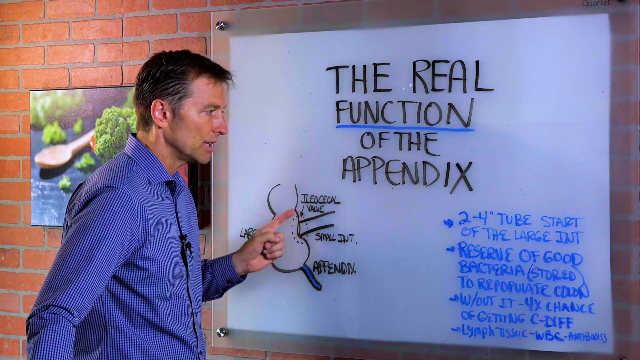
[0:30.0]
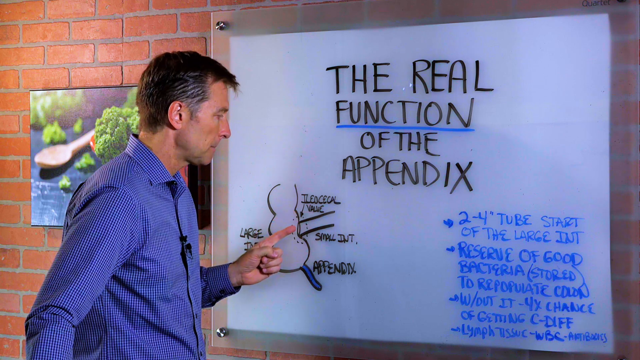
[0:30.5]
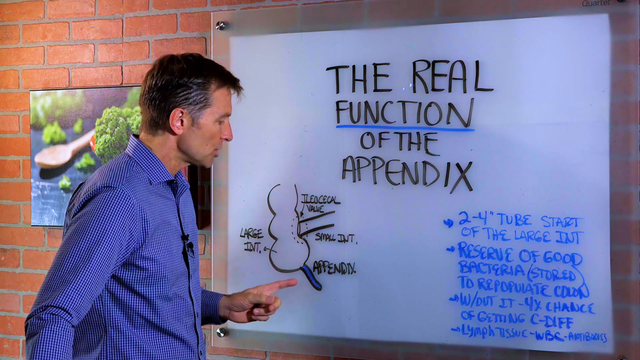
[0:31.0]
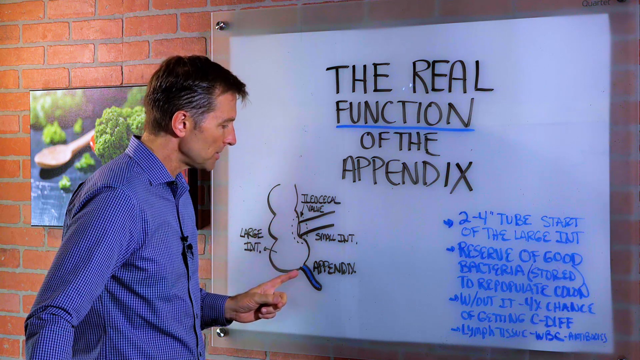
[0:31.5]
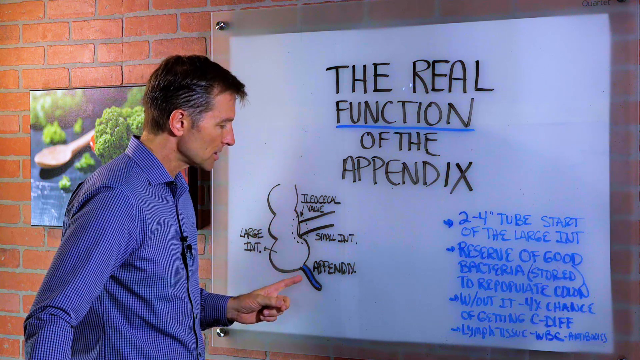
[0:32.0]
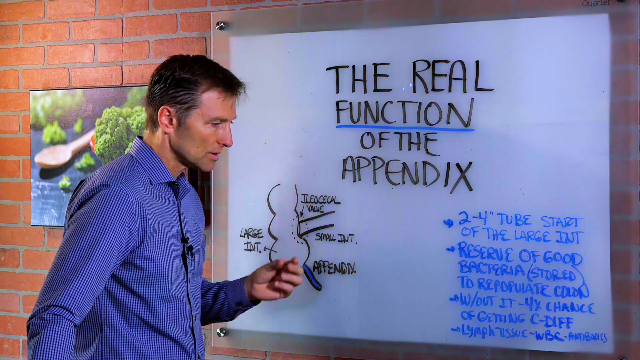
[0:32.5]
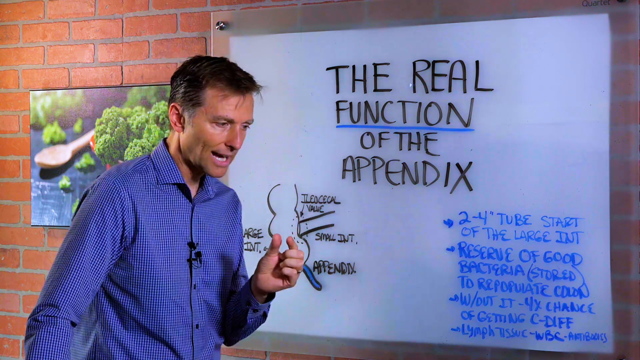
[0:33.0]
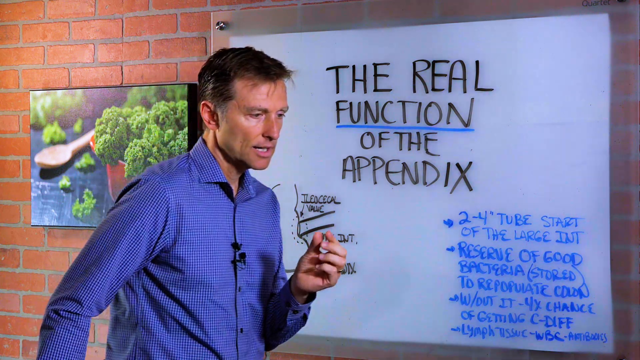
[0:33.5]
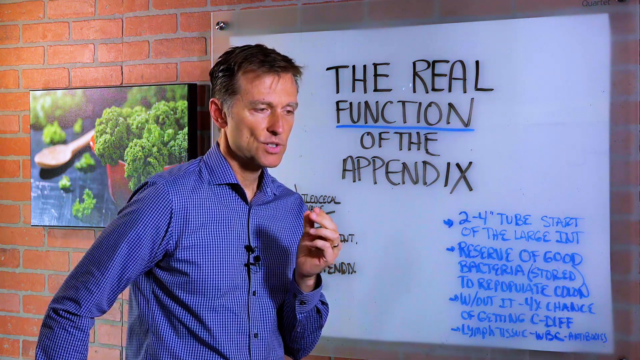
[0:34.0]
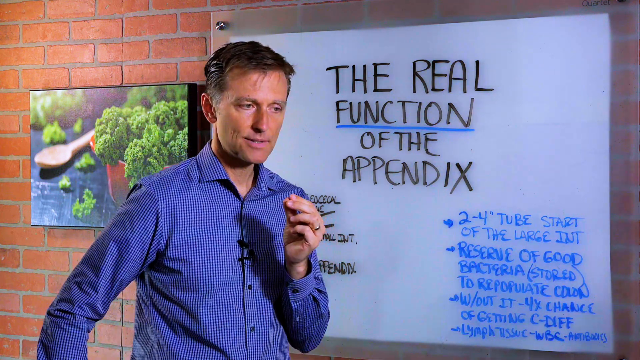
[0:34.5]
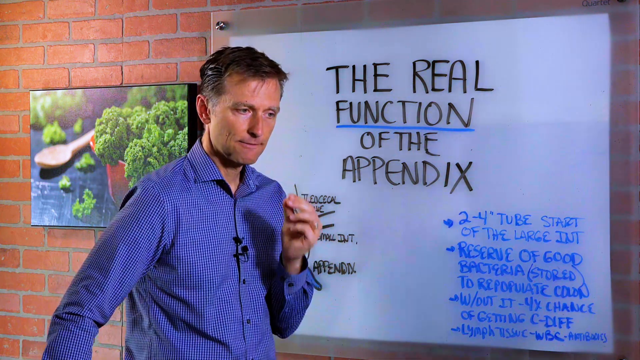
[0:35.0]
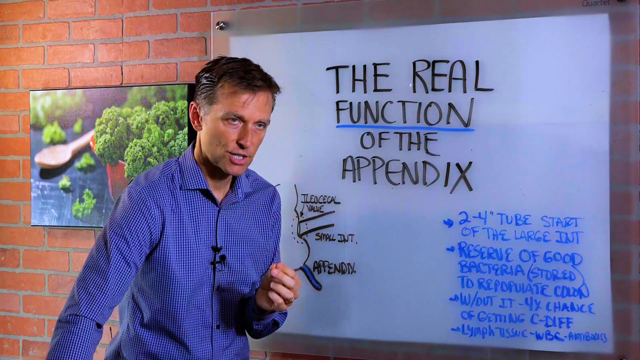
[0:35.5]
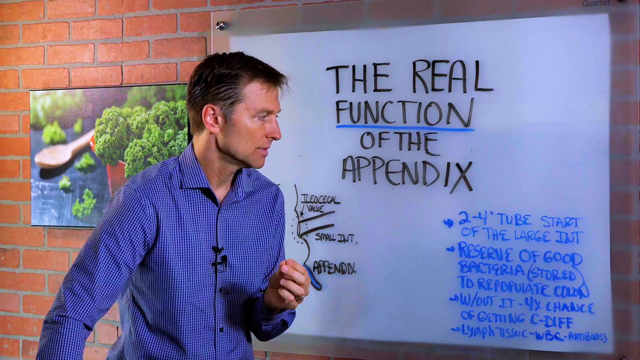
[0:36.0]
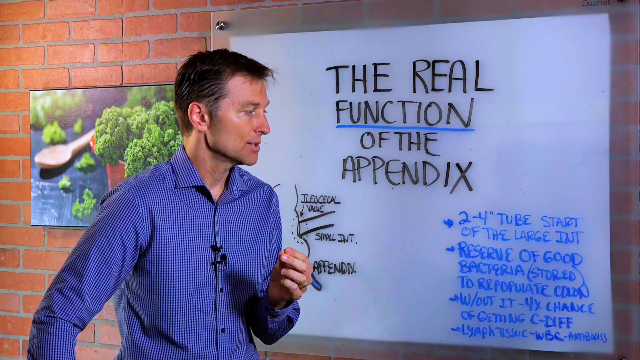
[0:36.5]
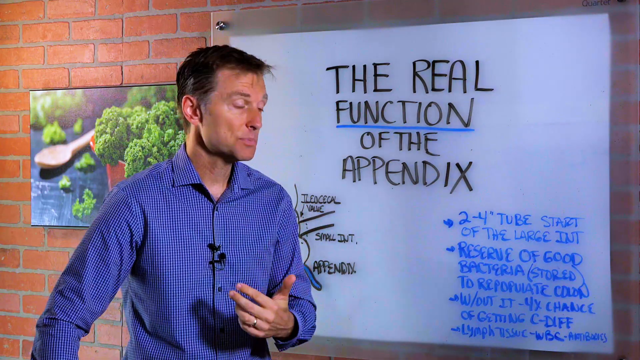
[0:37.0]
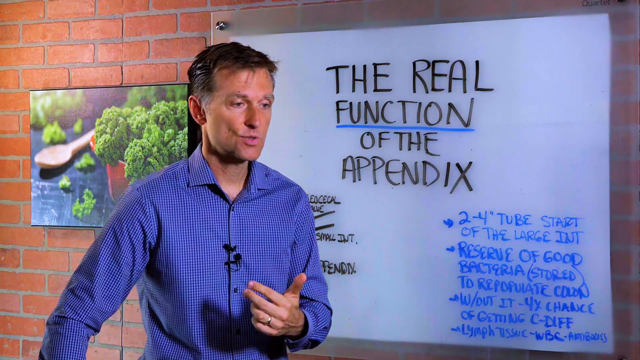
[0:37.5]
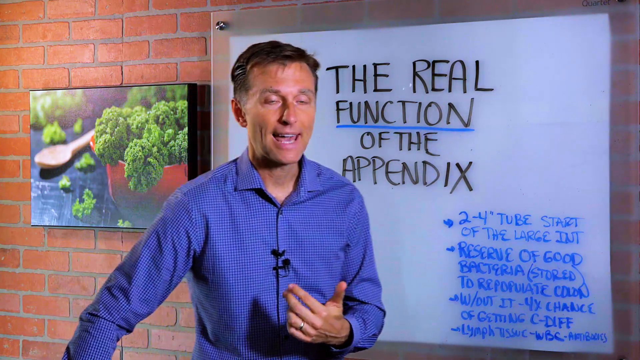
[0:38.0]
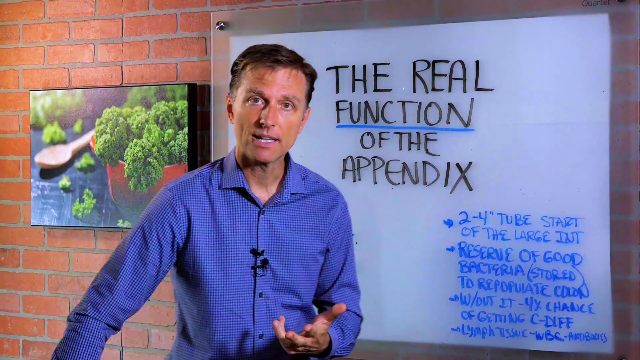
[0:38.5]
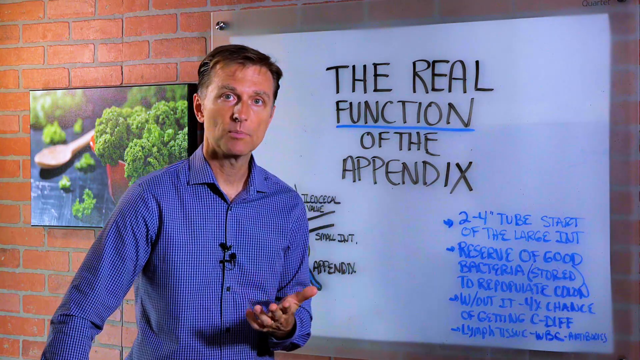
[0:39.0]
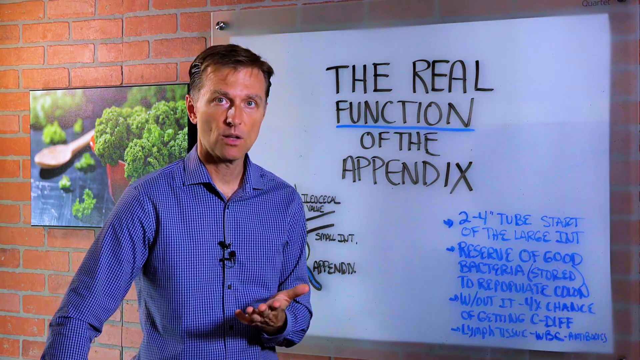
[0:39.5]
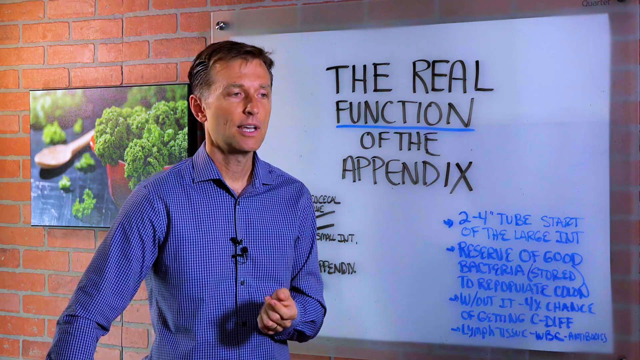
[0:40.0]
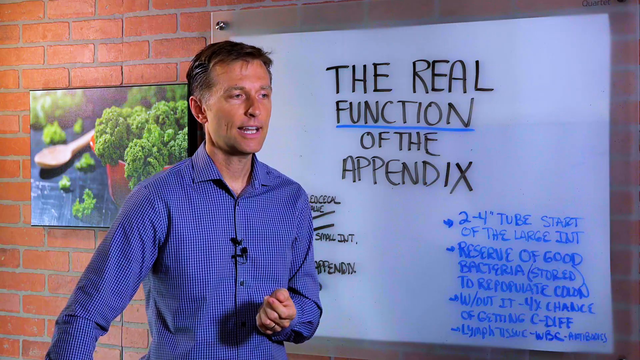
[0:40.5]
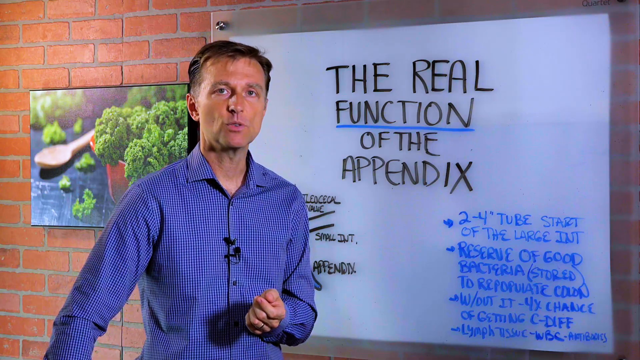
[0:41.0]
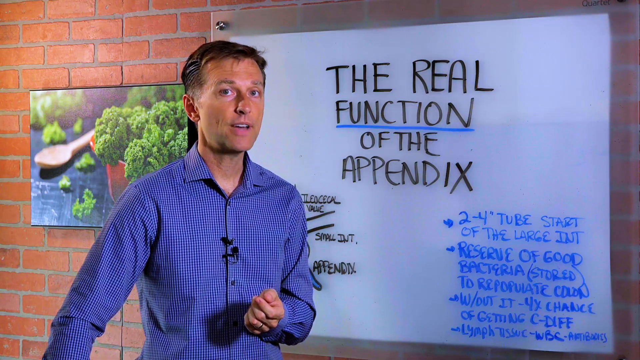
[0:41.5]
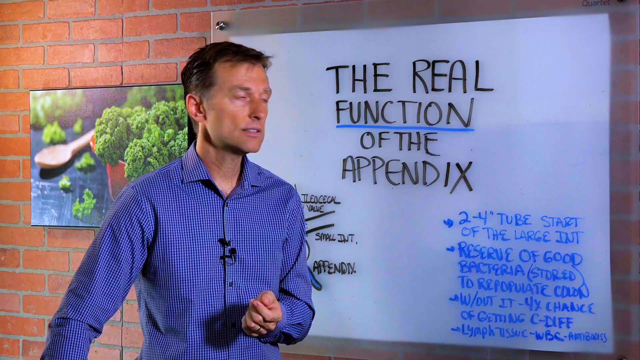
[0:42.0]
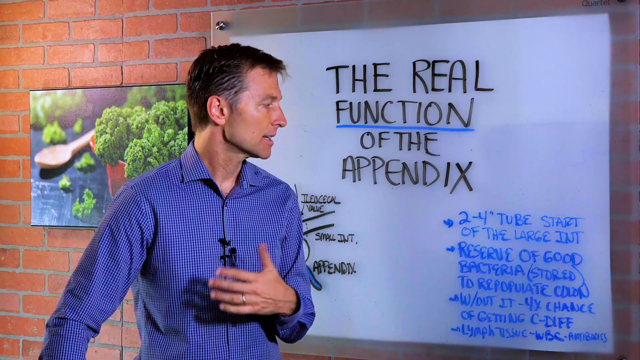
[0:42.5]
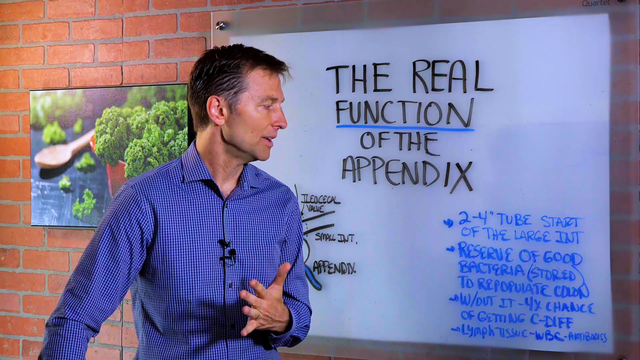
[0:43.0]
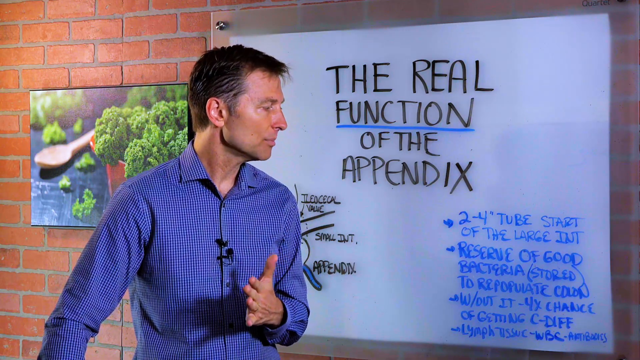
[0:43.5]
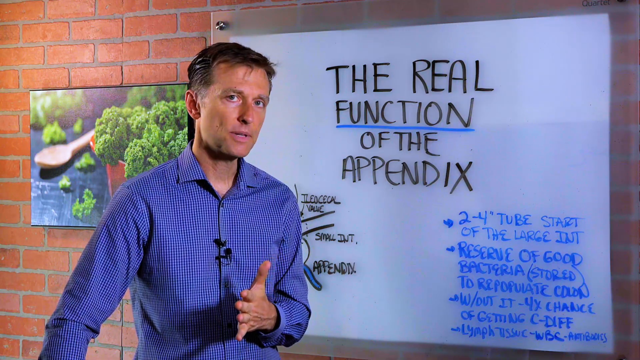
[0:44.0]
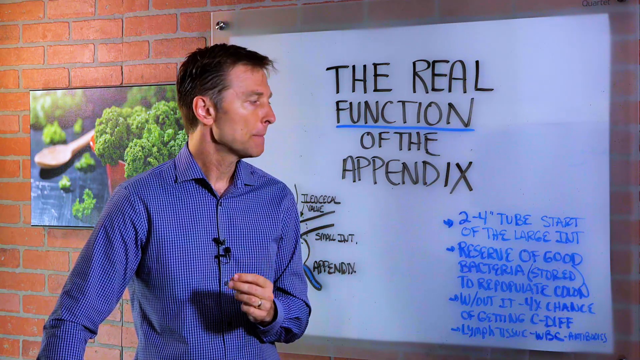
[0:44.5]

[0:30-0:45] The man, still talking passionately, points at the squiggly snowman-like drawing on the board. The board is not a traditional whiteboard: it looks almost see-through, with a hue like the old overhead projector sheets. It looks like plexiglass whose protective peel was never removed, giving it a milky colour, and he has written on top of it in black and blue. The board also looks like it is pinned up with pins.